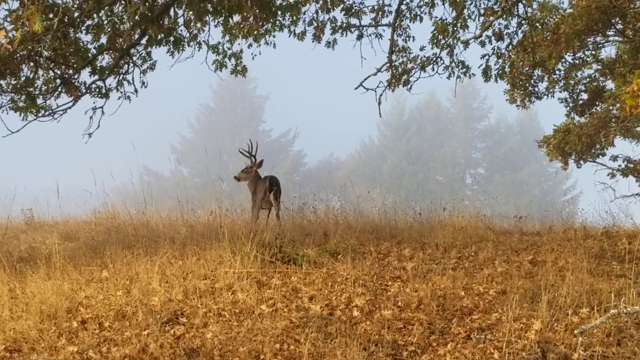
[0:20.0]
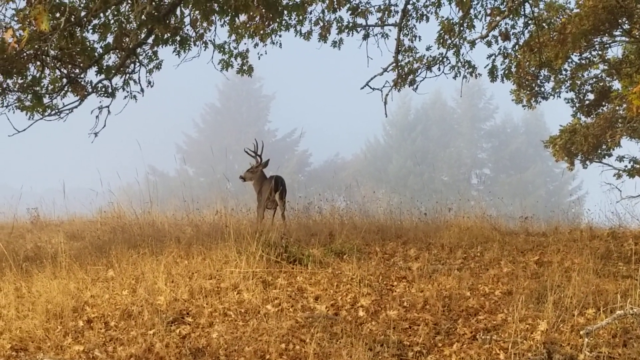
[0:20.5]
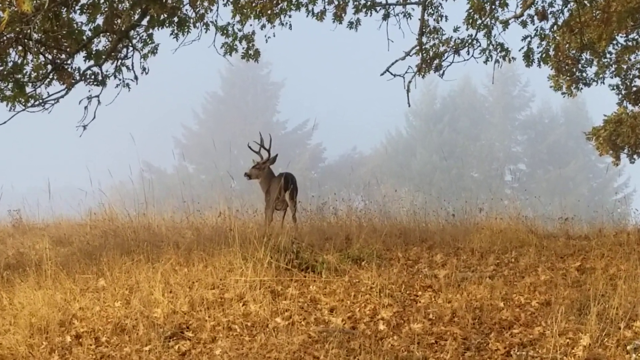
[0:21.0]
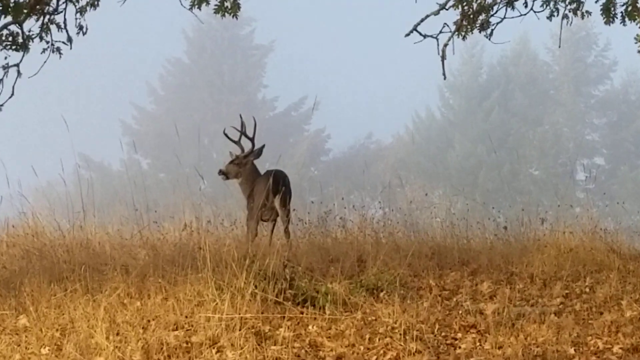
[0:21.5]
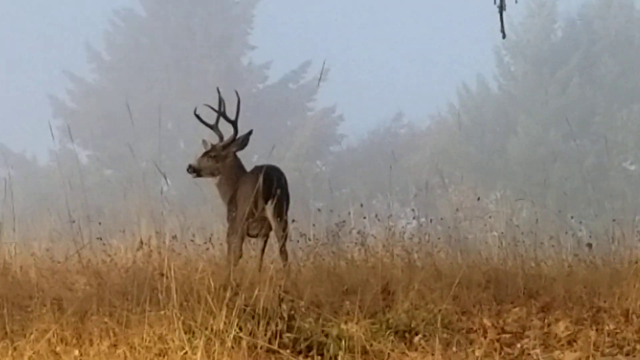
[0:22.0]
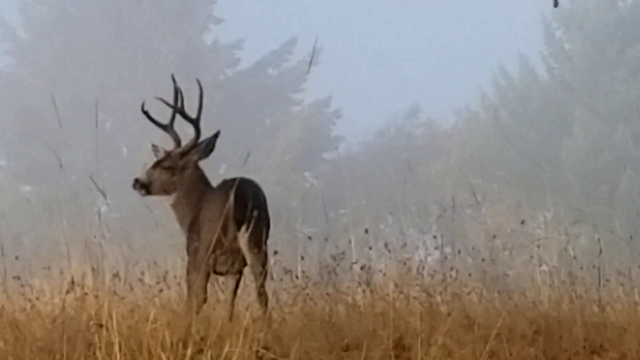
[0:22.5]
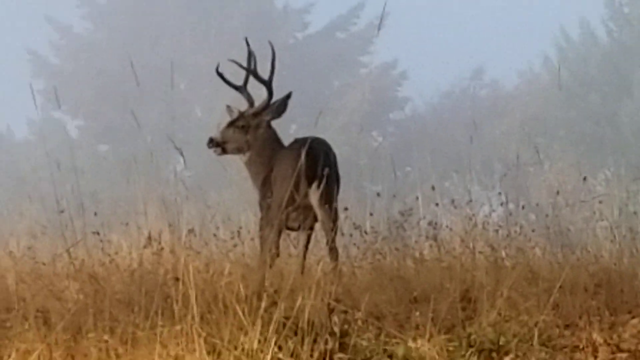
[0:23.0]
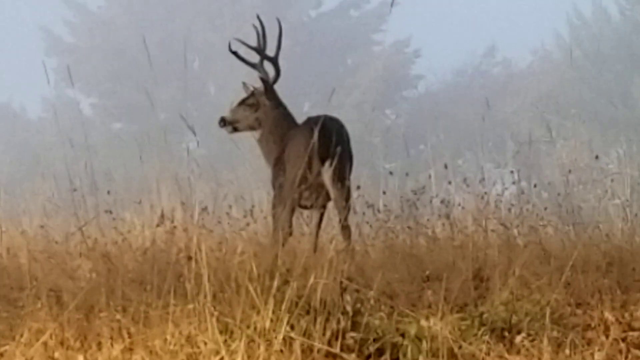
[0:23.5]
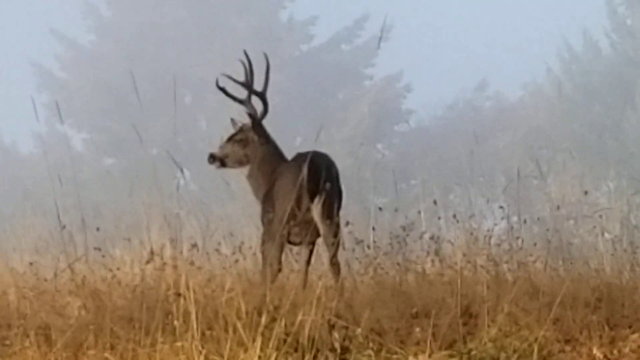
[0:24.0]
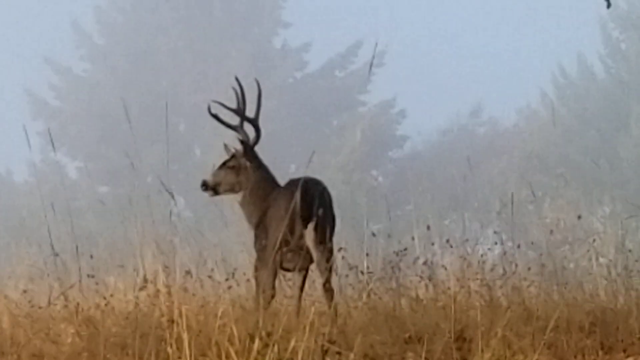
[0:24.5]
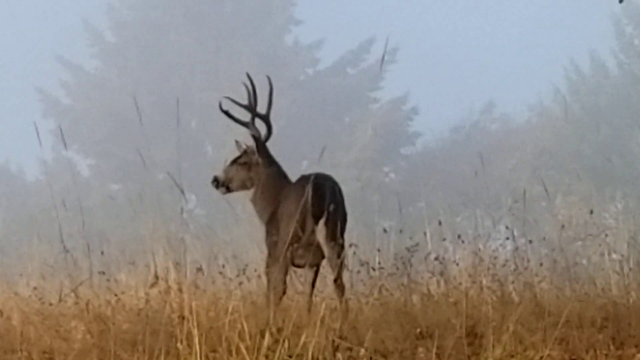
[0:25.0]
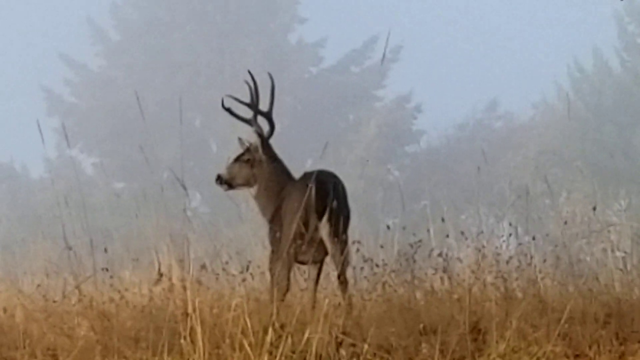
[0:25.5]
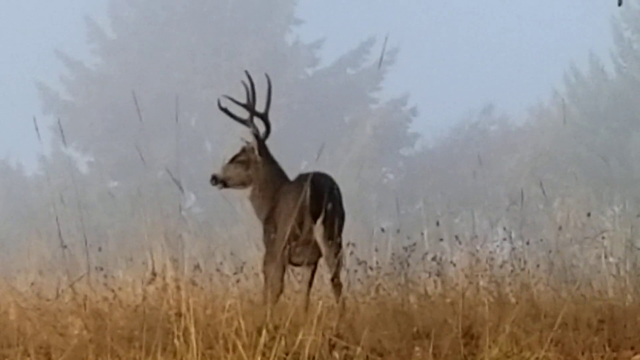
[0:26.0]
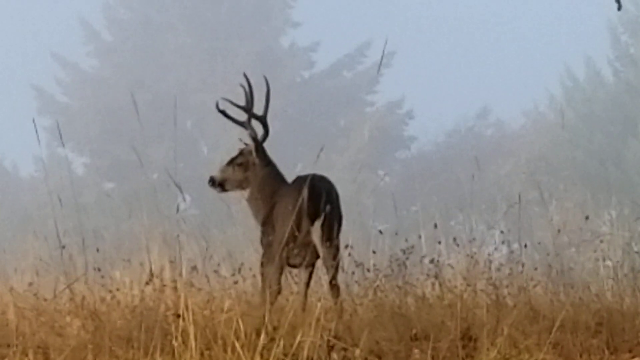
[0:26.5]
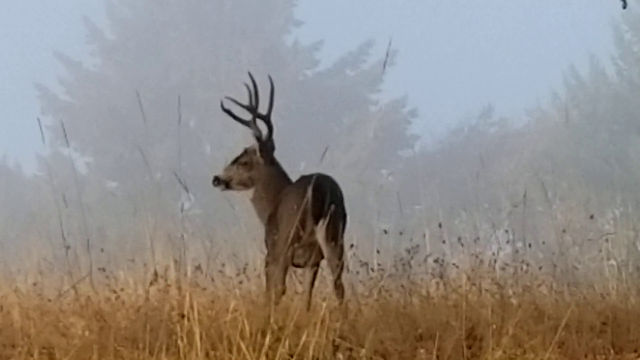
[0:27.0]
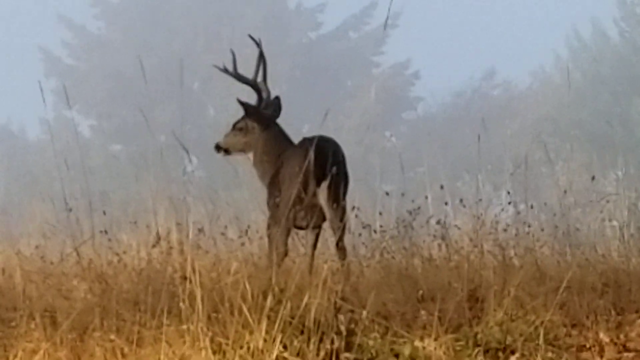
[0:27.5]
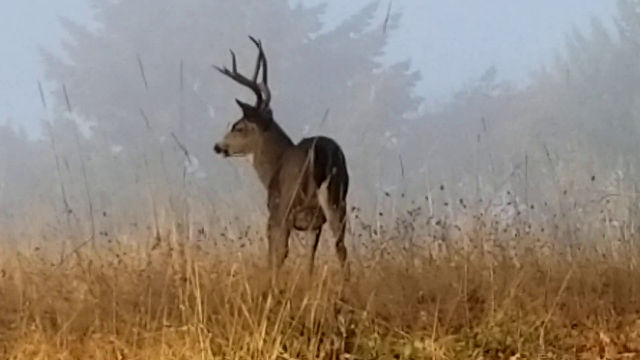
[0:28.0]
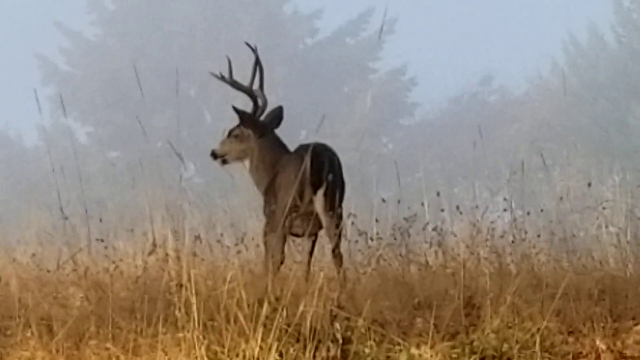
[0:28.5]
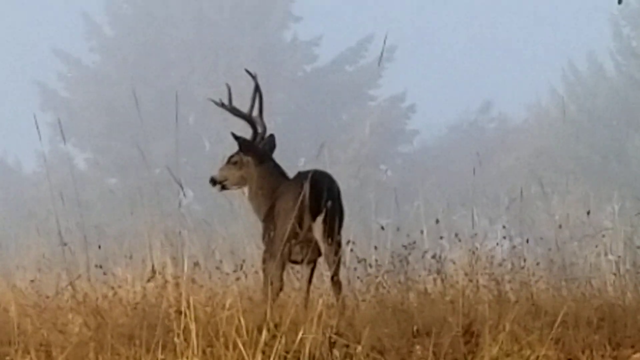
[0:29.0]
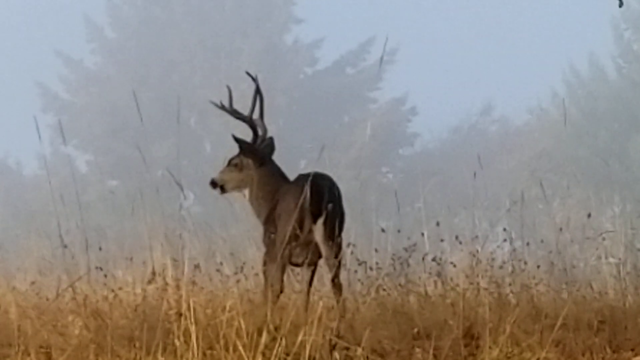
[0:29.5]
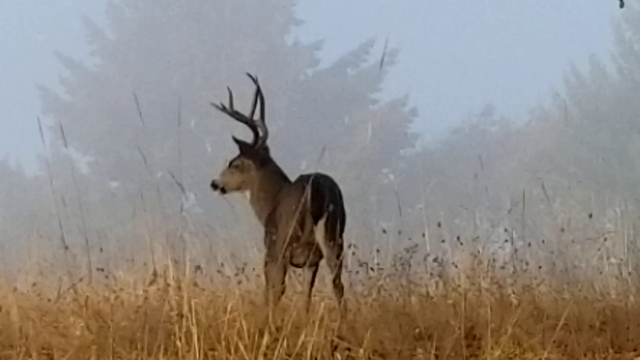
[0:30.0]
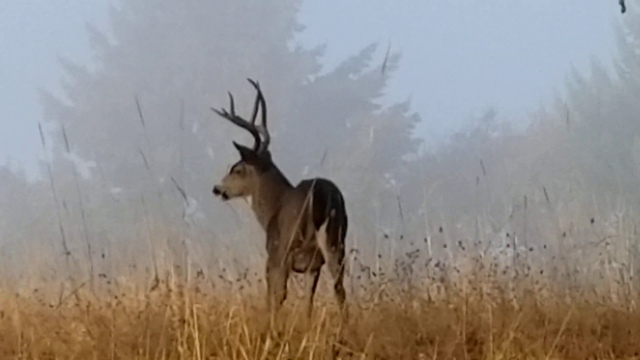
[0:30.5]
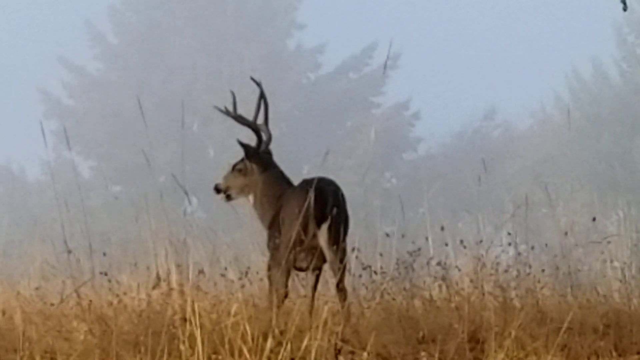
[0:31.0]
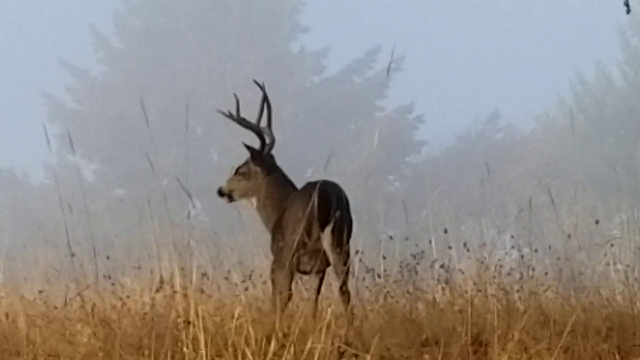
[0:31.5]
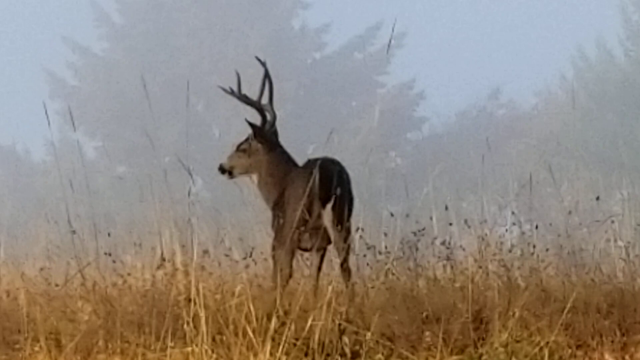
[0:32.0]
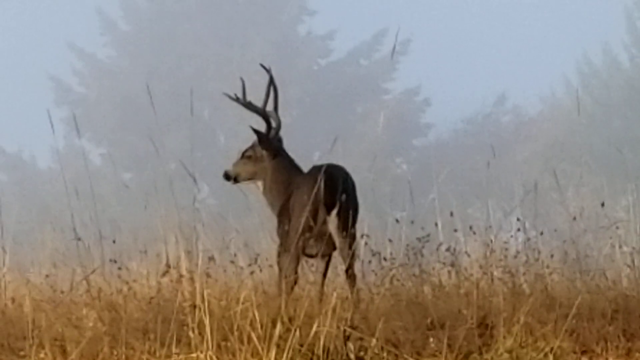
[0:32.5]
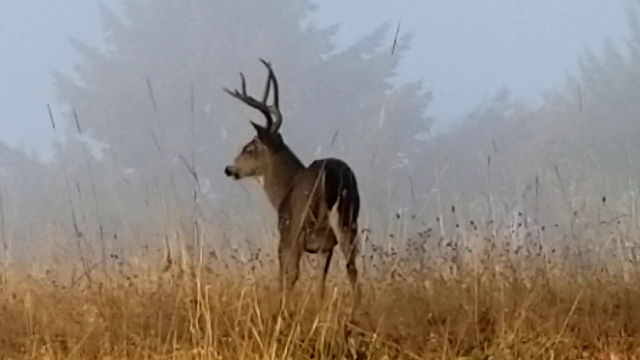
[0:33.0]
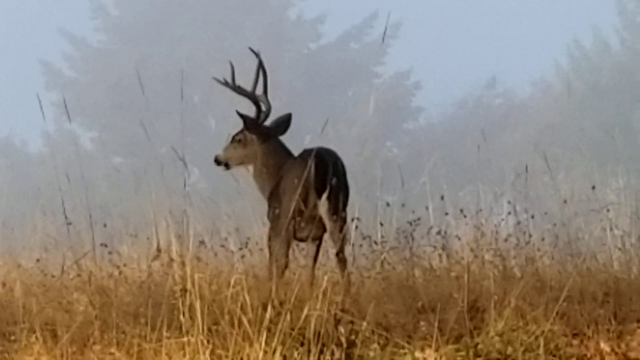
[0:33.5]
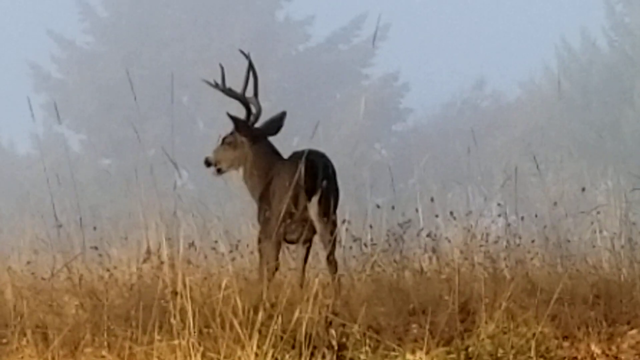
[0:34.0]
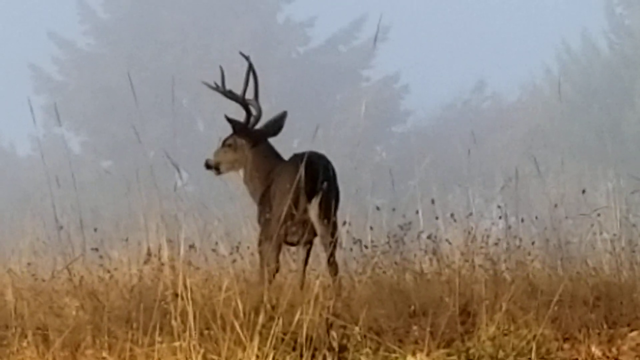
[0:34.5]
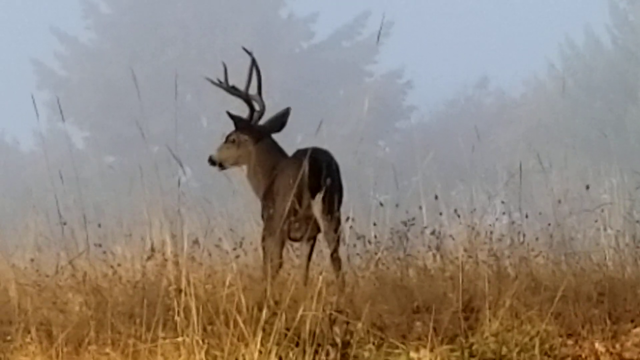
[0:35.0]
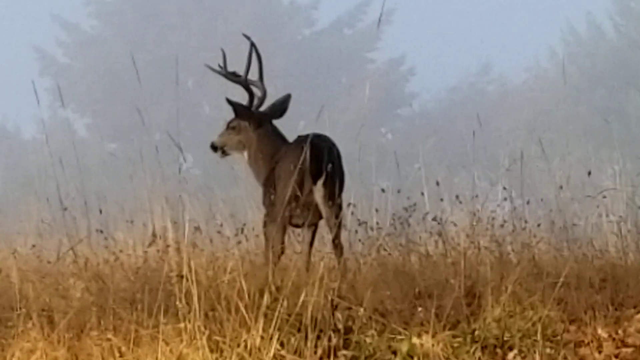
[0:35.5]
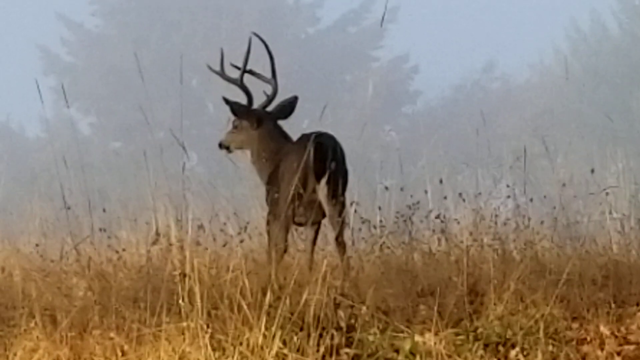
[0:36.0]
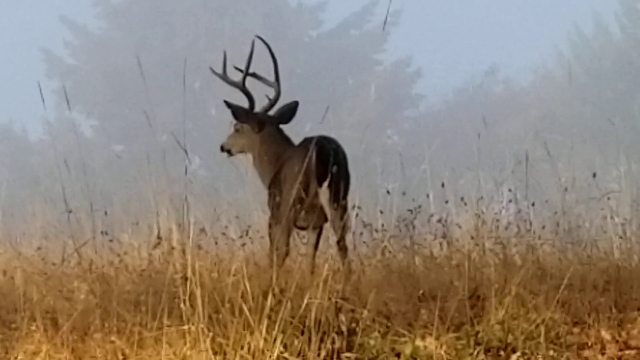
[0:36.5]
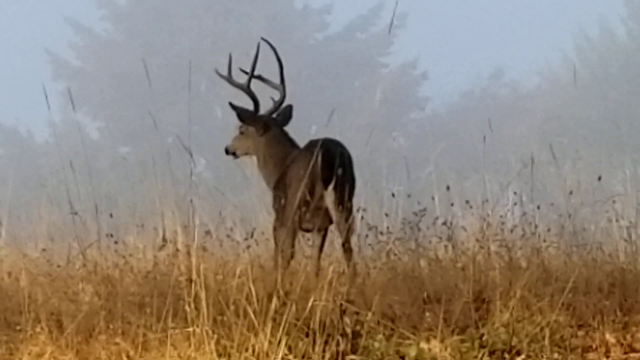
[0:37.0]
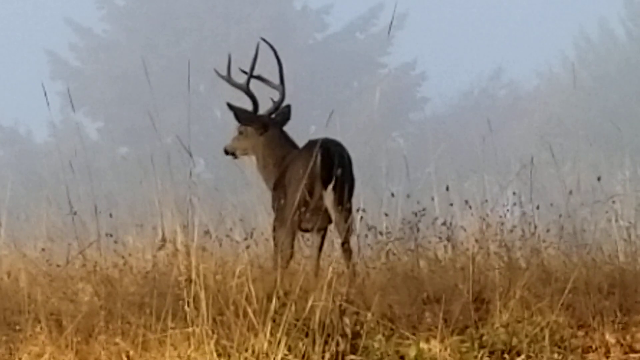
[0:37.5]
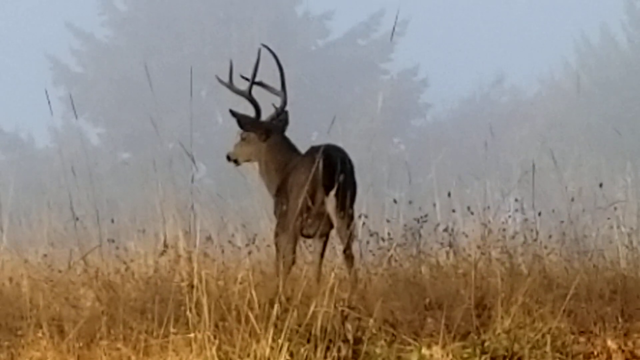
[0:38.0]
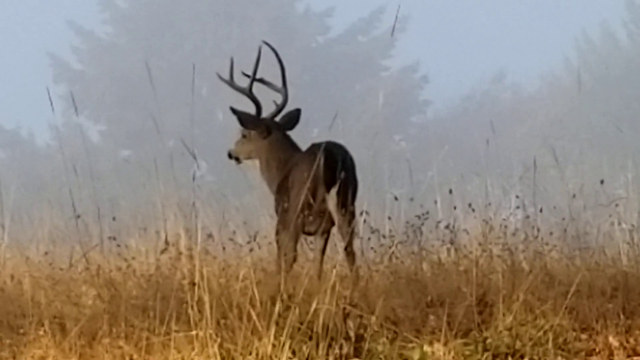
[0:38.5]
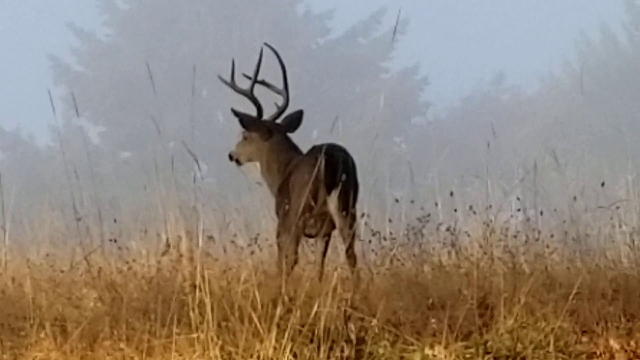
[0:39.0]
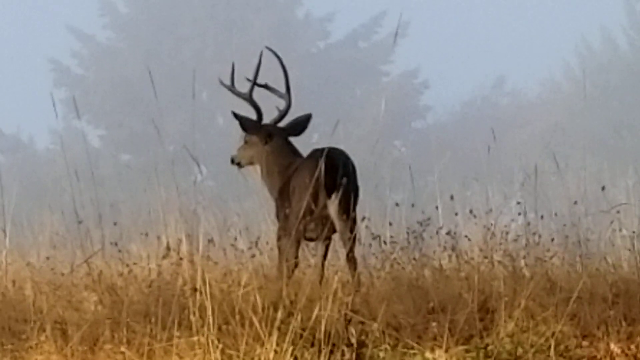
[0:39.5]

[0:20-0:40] The deer is very alert, standing in a powerful stance with its legs spread apart, its head still looking to the left side. The person filming begins zooming in, with some shake evident, most likely from holding the camera by hand. Zoomed in, the deer can be seen in greater detail, chewing on some sort of food. For a brief moment, the deer drops a significantly large chunk of what it is eating onto the floor, seemingly having too much in its mouth. The deer's right ear twitches a few times before the deer turns to face center again.